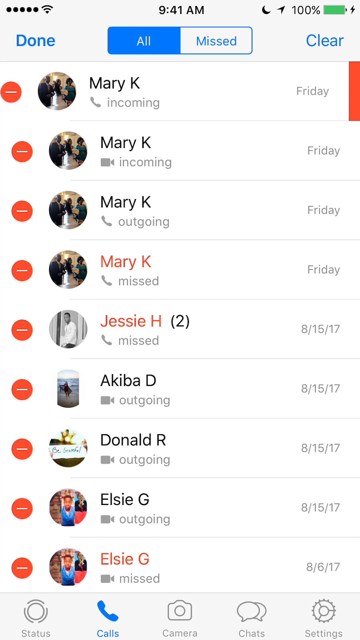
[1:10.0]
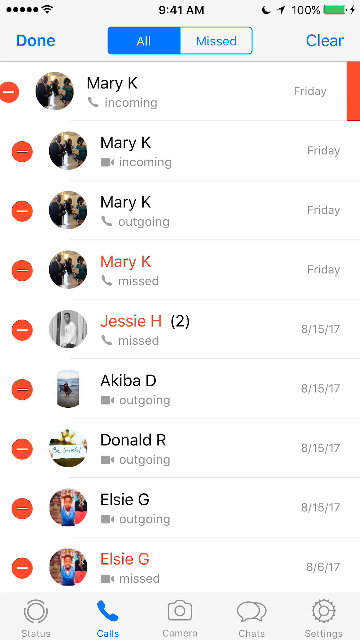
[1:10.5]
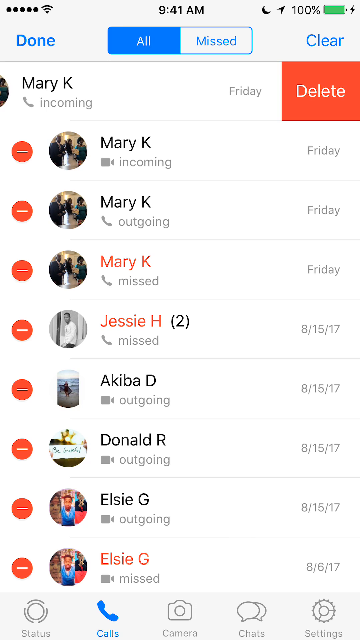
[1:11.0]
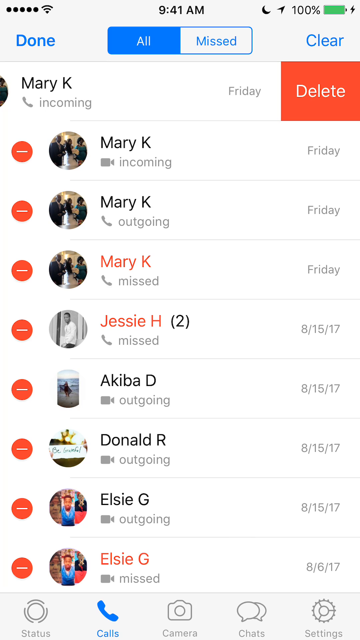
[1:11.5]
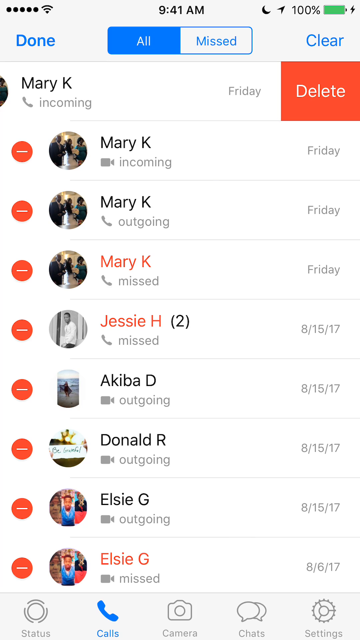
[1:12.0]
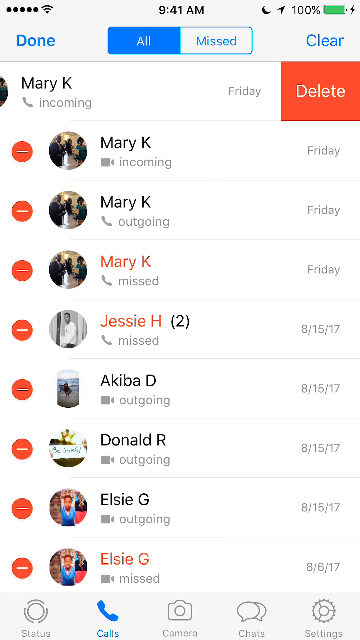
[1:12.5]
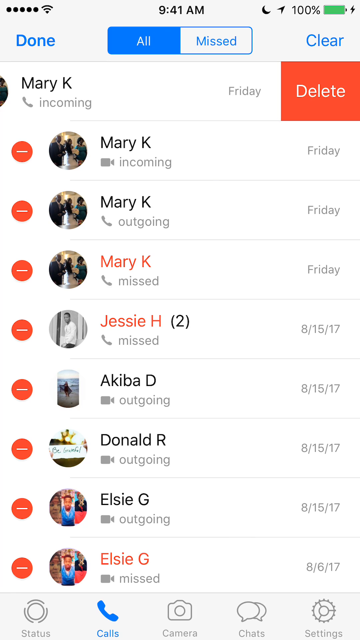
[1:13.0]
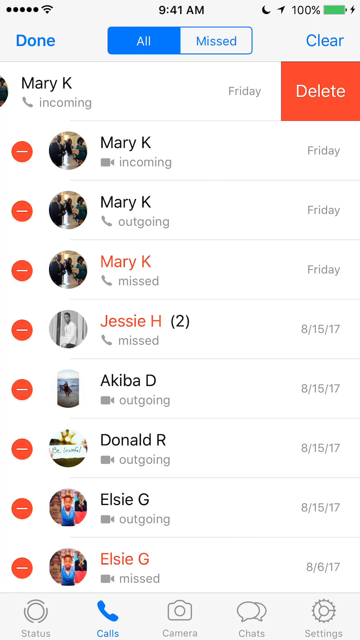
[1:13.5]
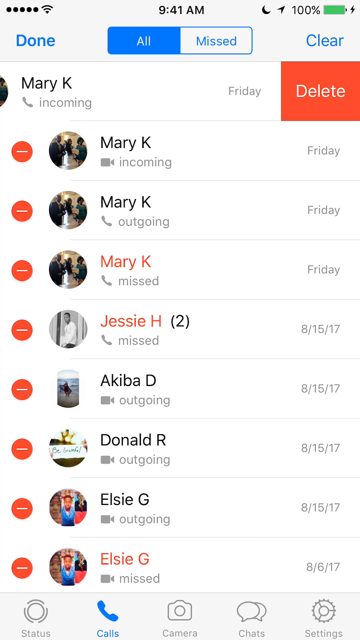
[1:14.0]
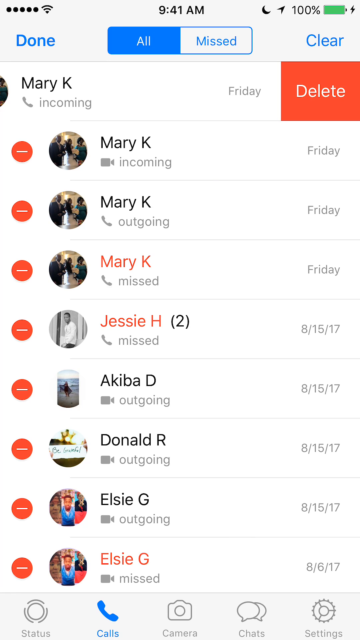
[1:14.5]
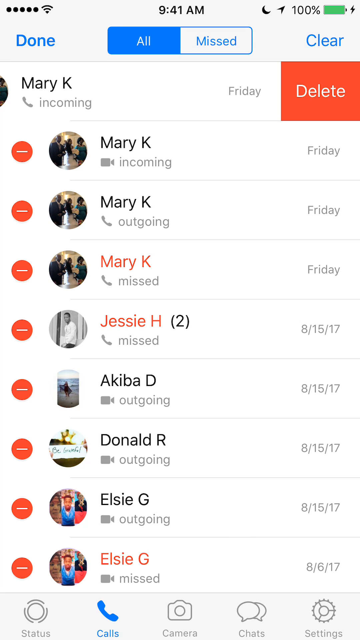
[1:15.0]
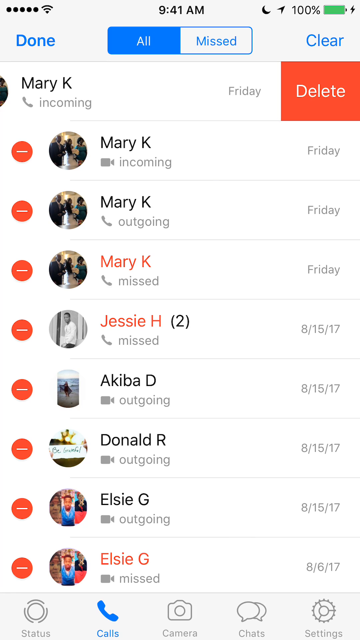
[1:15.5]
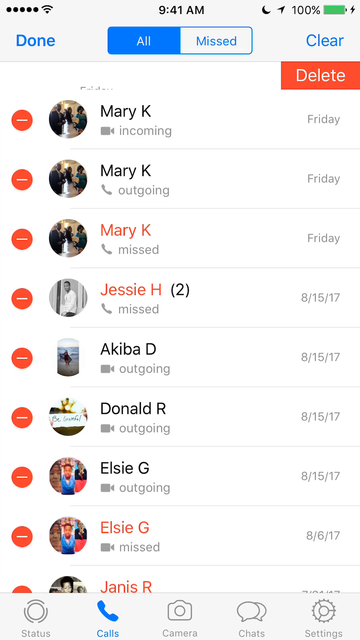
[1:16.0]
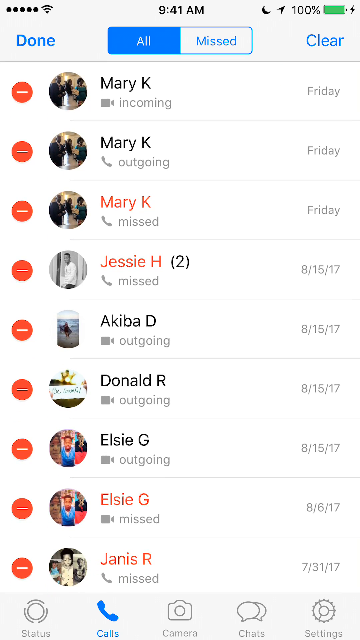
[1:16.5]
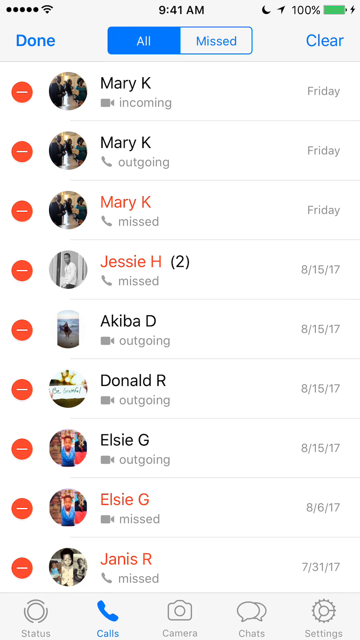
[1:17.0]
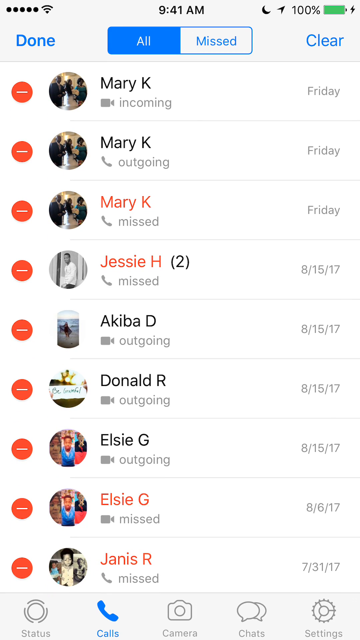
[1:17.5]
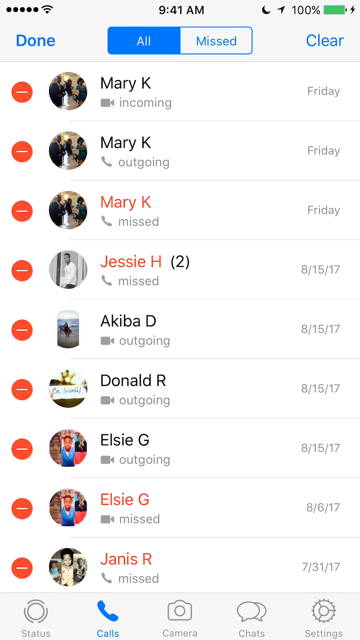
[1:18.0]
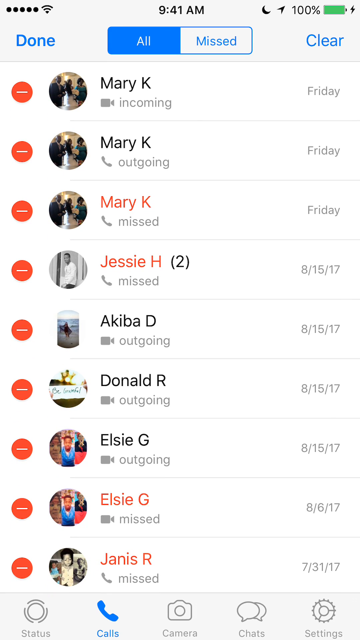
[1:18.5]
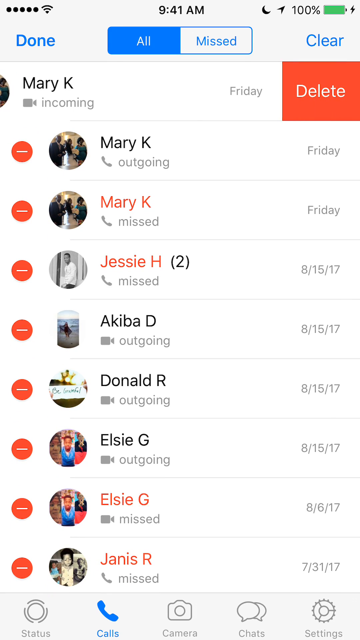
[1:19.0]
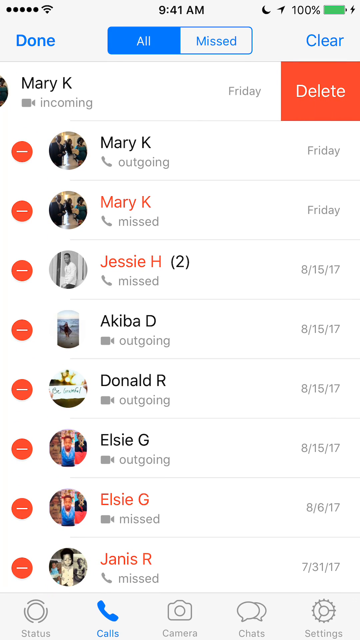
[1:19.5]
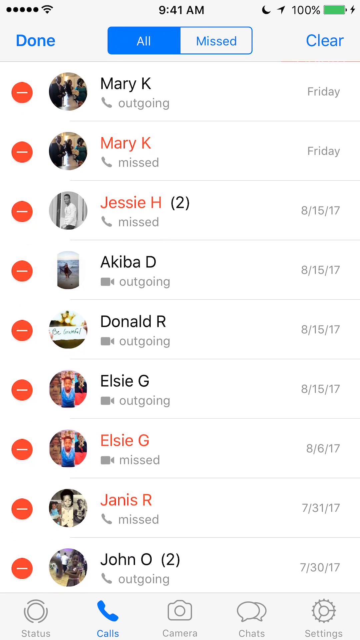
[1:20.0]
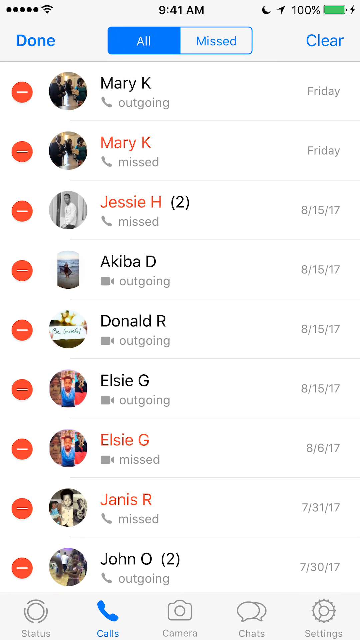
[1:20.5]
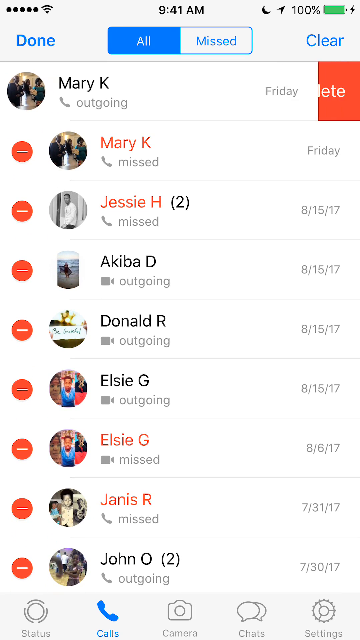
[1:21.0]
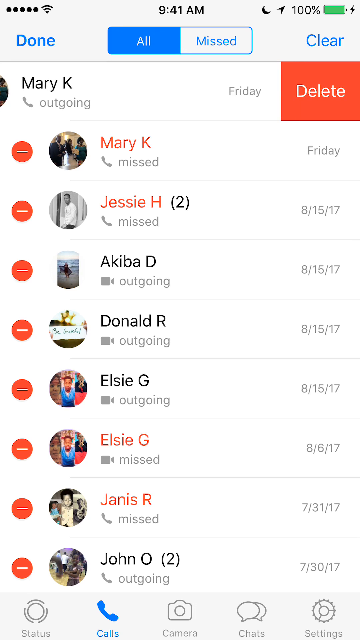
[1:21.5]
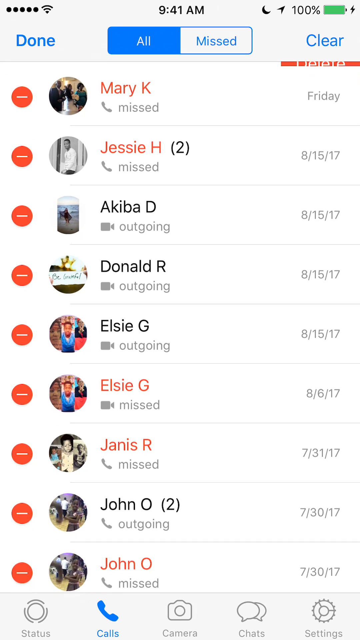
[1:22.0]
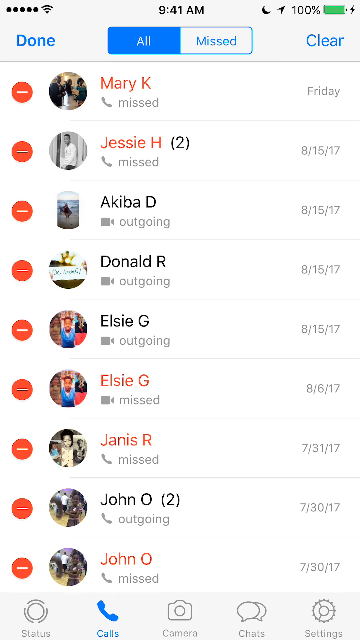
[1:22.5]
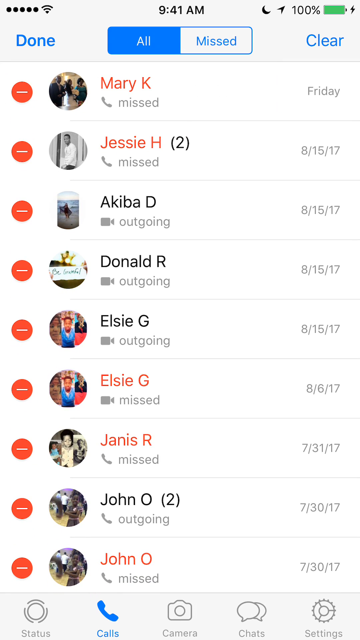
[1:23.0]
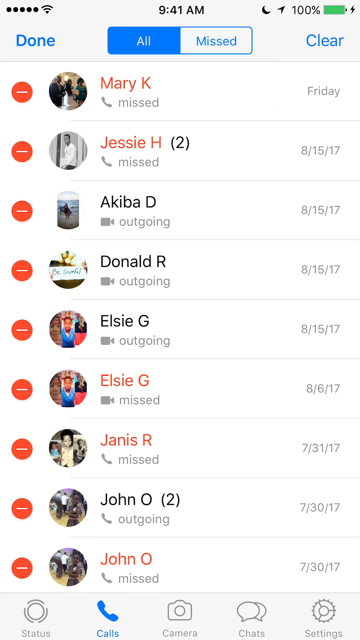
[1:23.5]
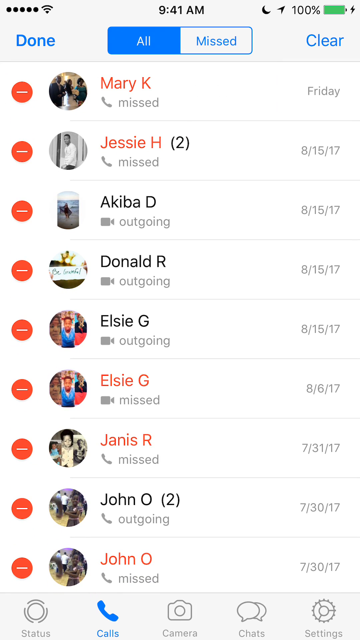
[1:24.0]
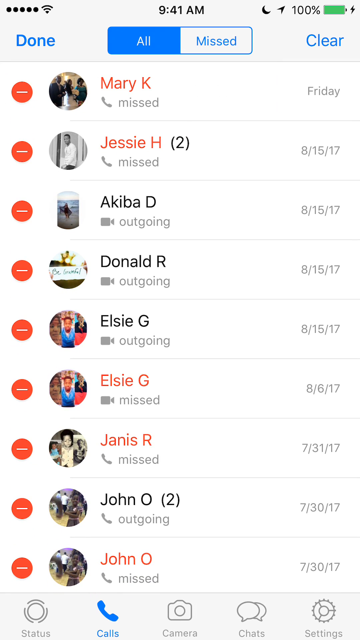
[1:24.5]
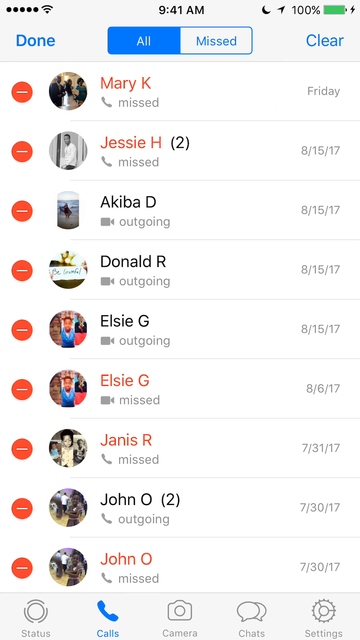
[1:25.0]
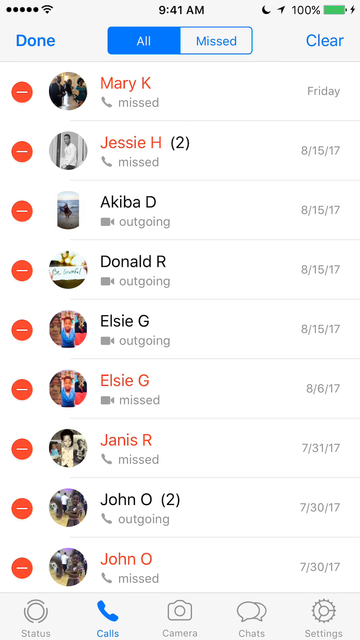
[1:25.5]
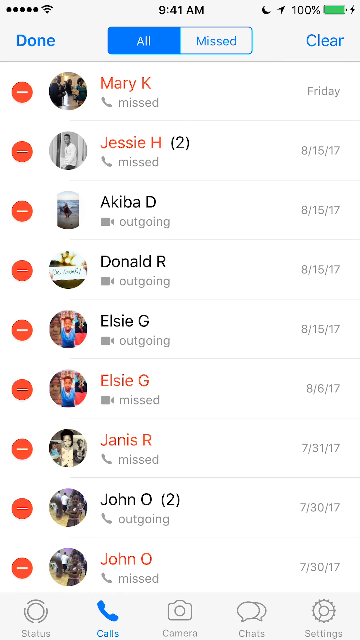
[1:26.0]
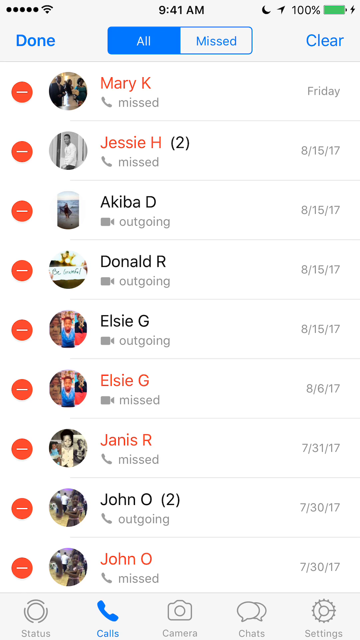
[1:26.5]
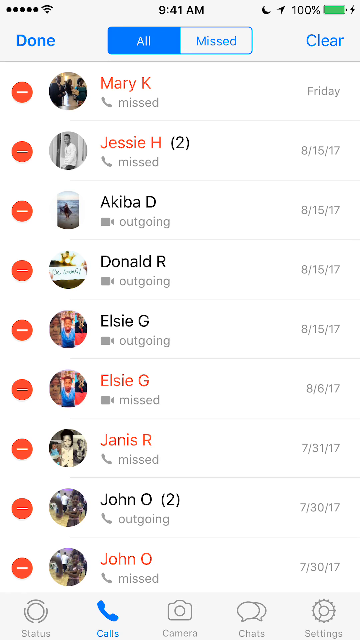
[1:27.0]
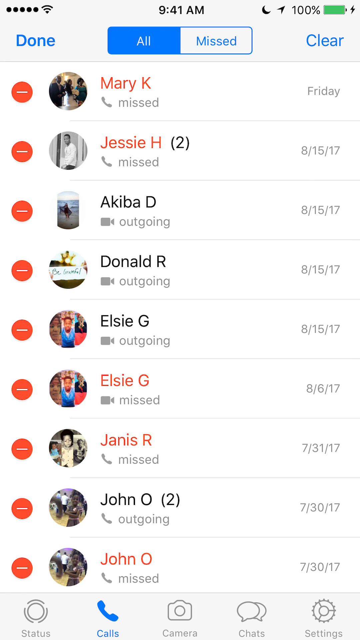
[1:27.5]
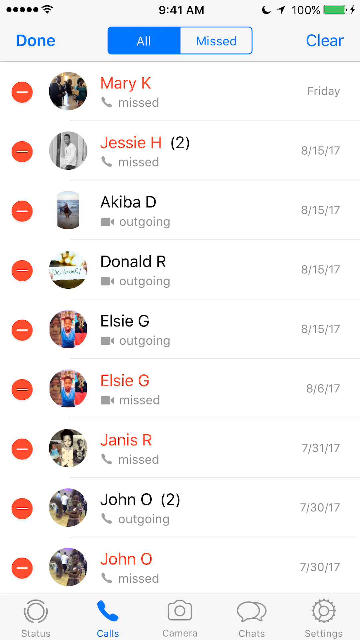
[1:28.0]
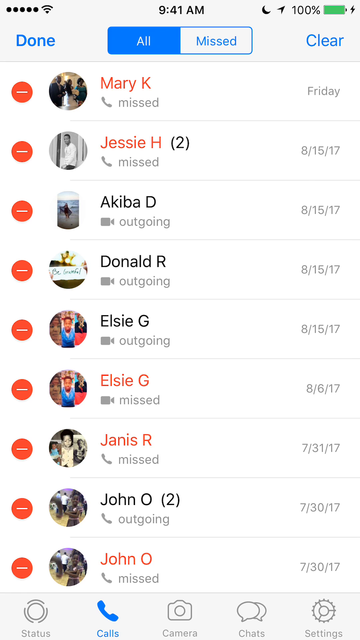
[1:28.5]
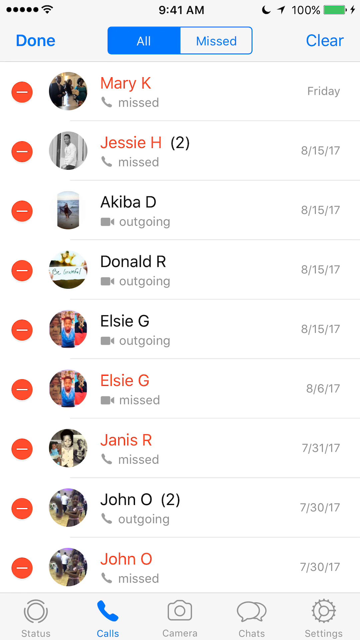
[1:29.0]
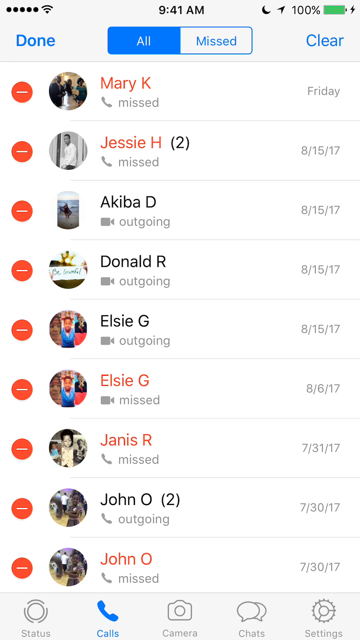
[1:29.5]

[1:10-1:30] The phone logs on an iPhone screen show "DONE" in the top left, and in the middle two boxes, "ALL" on the left, highlighted in blue, and "MISSED" on the right. To the right is the word "CLEAR" in blue. Below is a list of names, each with a picture to the left: four entries for Mary Kay, then Jessie H, Akiba D, Donald R, Elsie G, and another Elsie G. To the left of each entry is a red circle with a horizontal white line. A delete button appears to the right of the first Mary Kay entry, stays there for a little while, then goes away as the first Mary Kay entry is removed, leaving three Mary Kay entries at the top. A delete button appears on the first Mary Kay entry again and that entry is deleted, leaving two, and this is done once more, leaving one Mary Kay entry at the top of the screen. The view holds there for a few seconds.